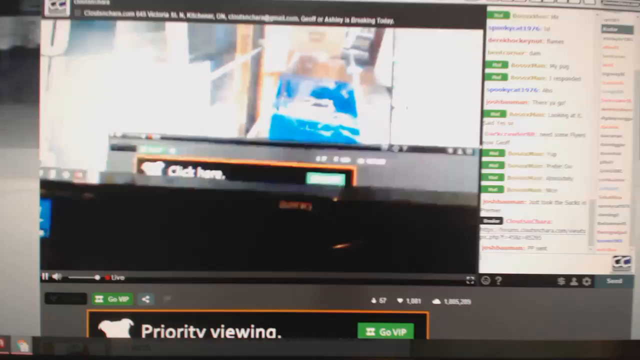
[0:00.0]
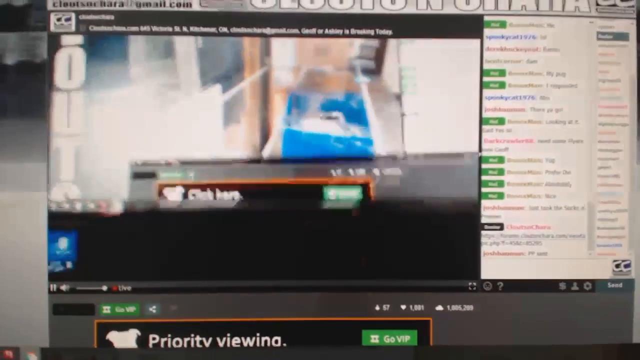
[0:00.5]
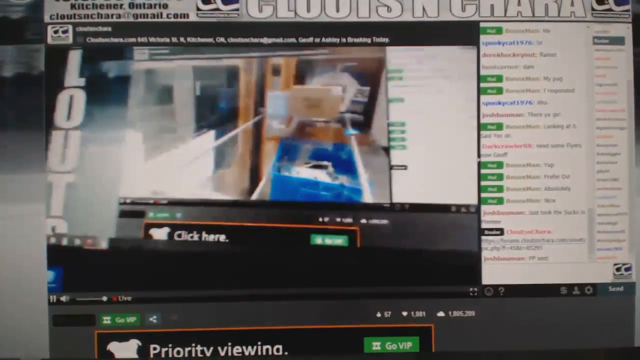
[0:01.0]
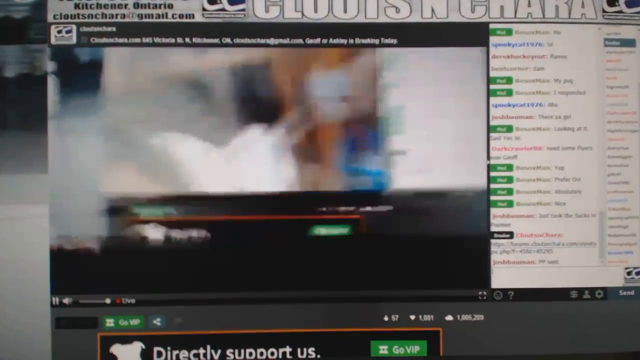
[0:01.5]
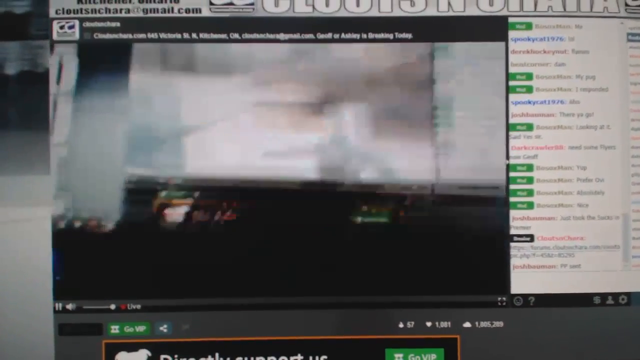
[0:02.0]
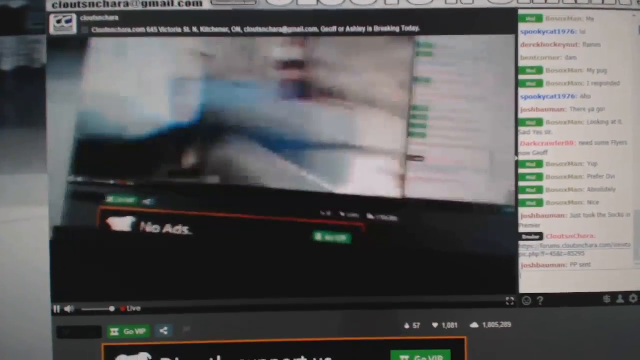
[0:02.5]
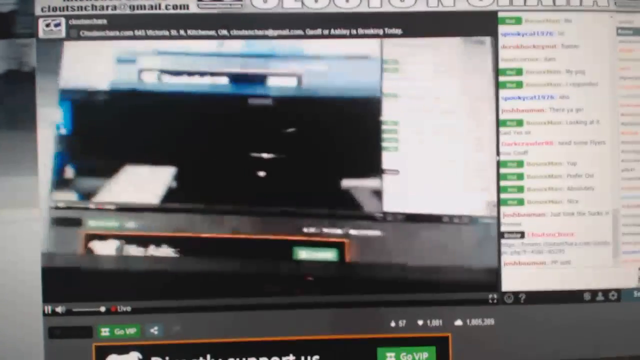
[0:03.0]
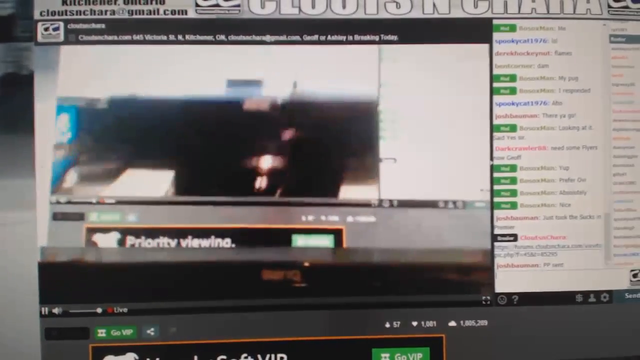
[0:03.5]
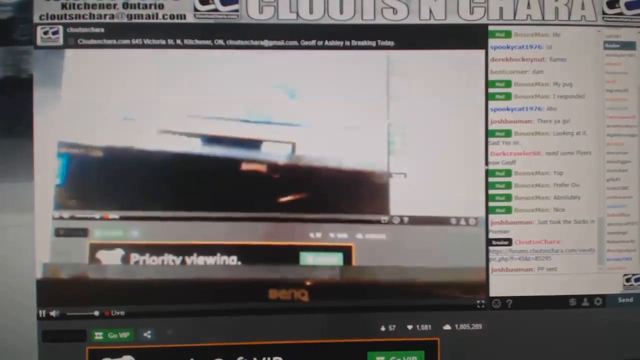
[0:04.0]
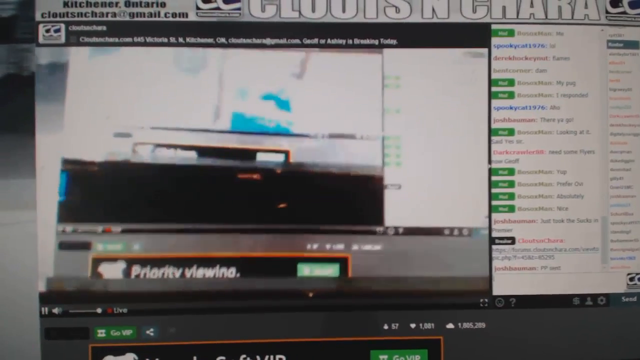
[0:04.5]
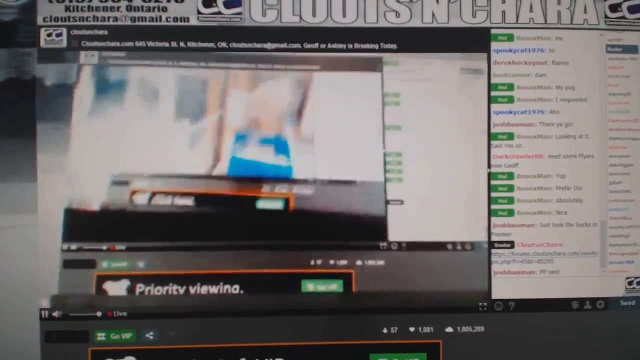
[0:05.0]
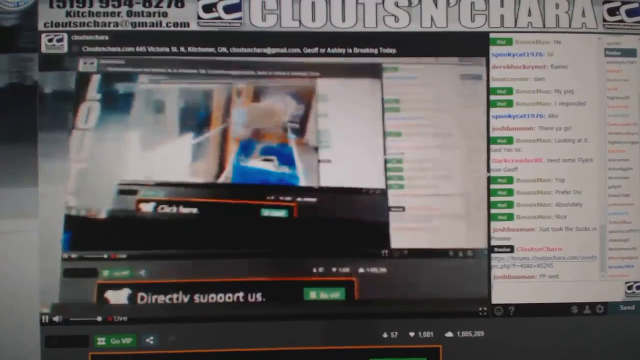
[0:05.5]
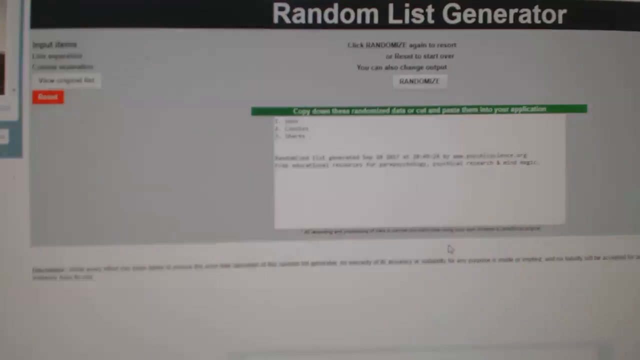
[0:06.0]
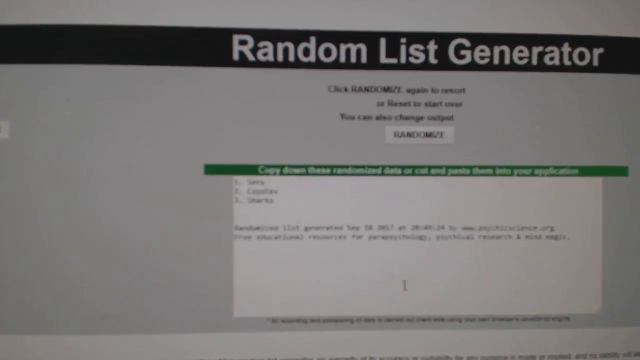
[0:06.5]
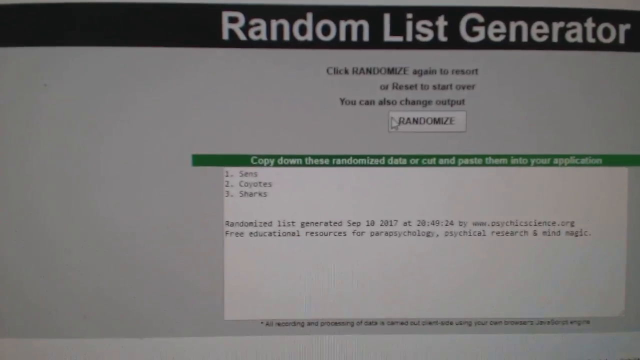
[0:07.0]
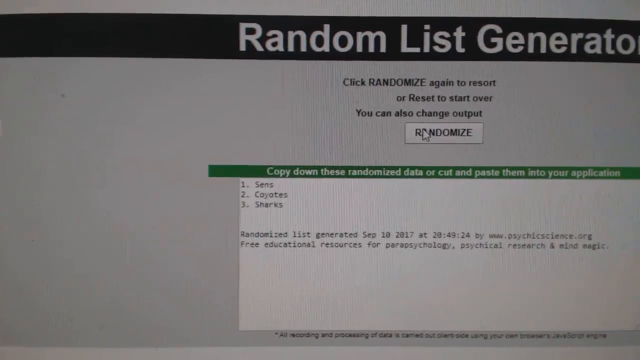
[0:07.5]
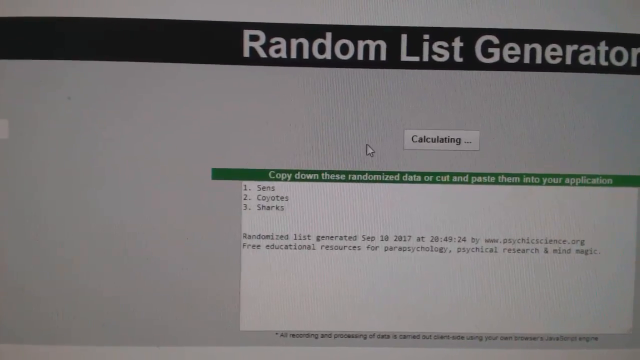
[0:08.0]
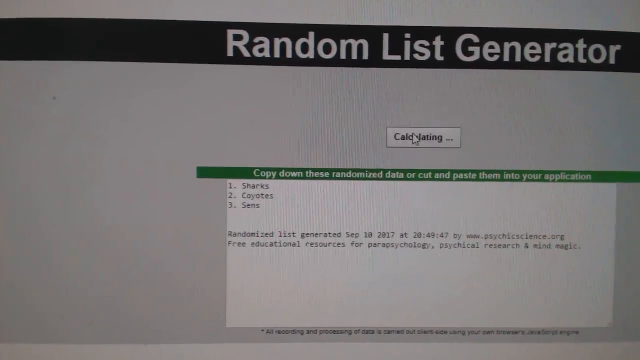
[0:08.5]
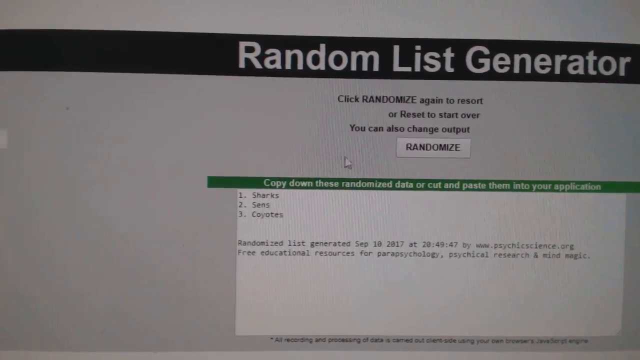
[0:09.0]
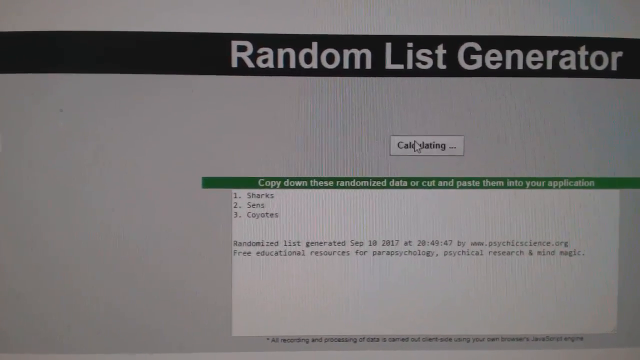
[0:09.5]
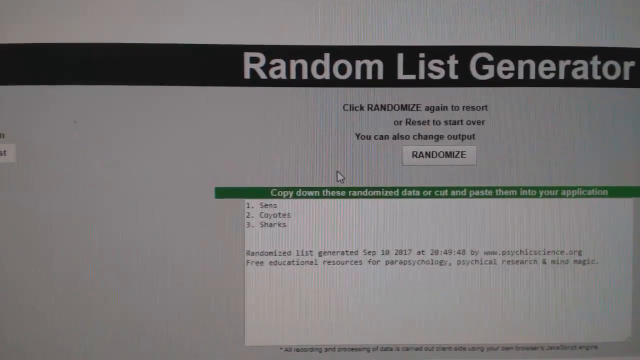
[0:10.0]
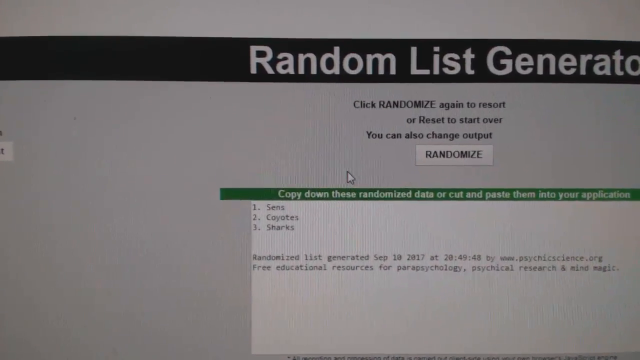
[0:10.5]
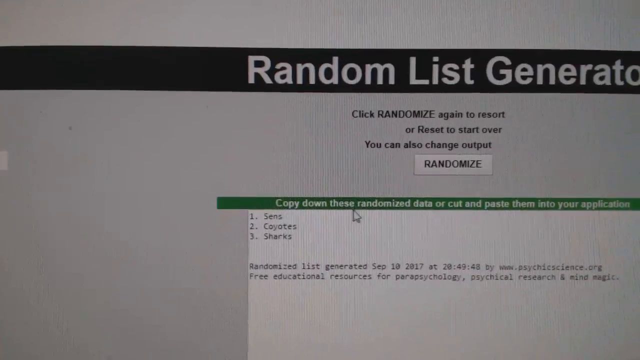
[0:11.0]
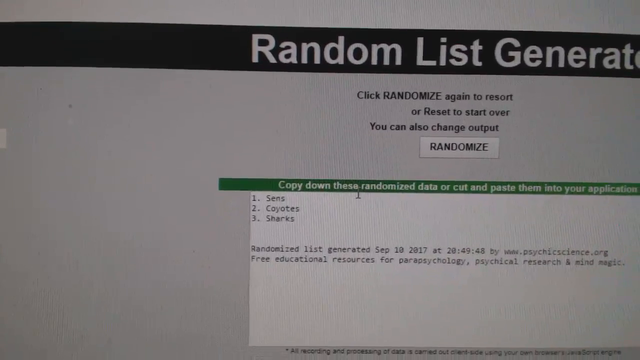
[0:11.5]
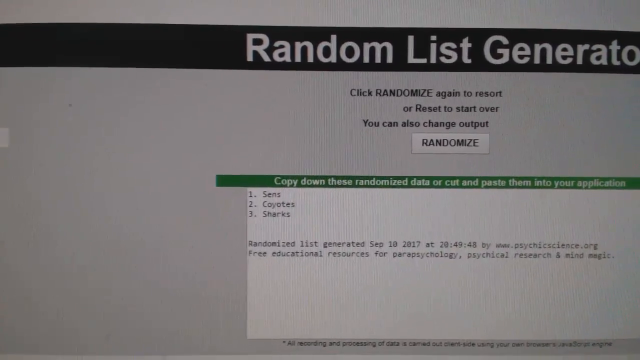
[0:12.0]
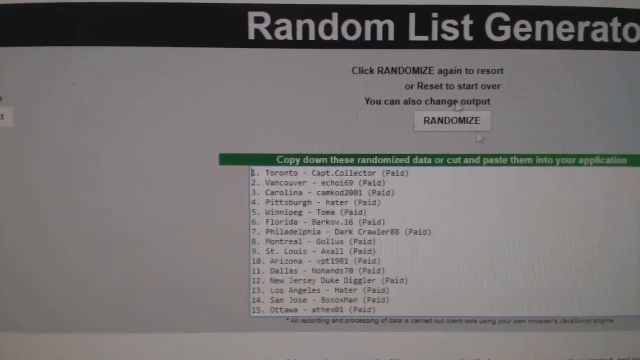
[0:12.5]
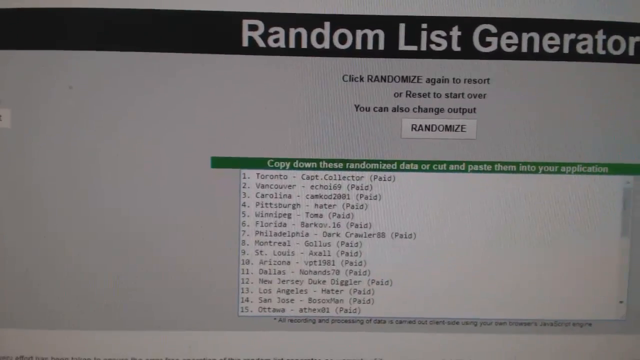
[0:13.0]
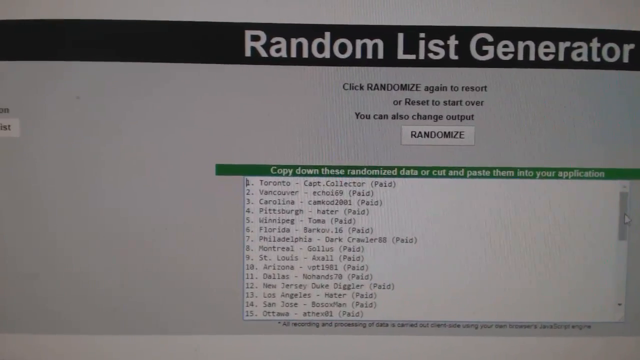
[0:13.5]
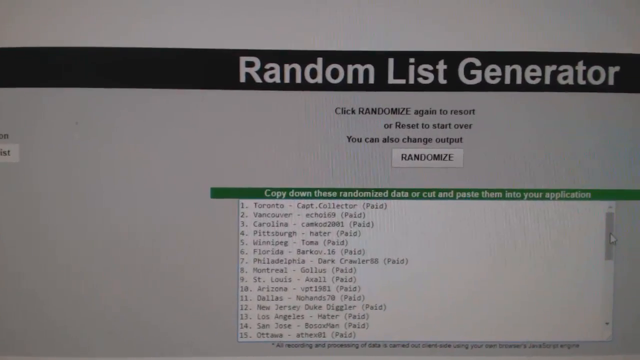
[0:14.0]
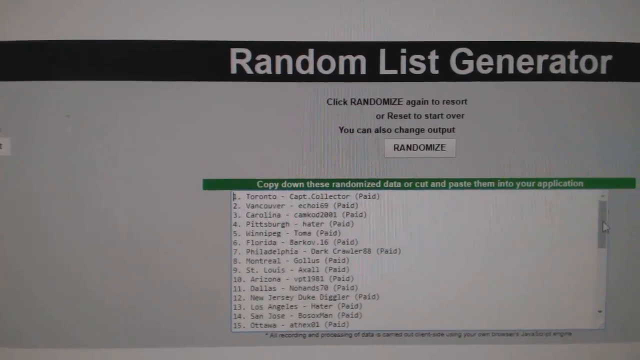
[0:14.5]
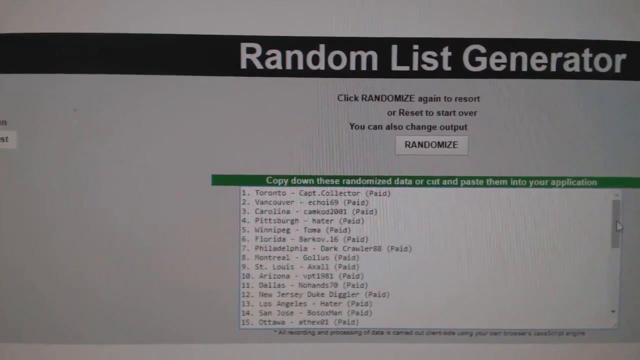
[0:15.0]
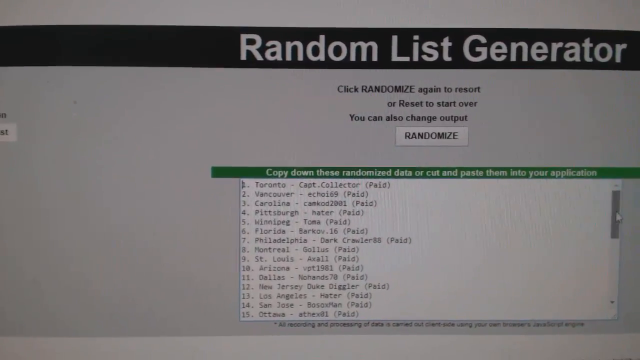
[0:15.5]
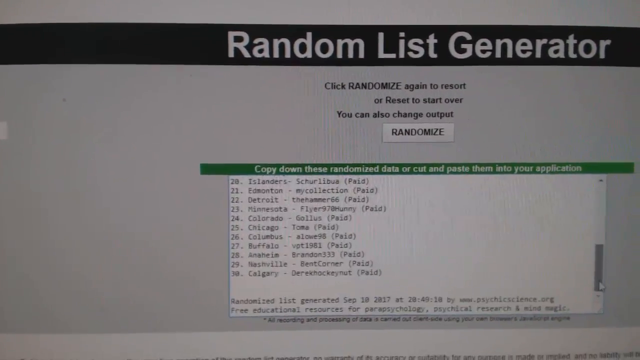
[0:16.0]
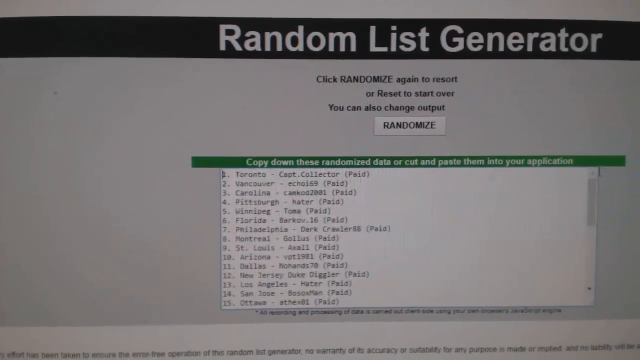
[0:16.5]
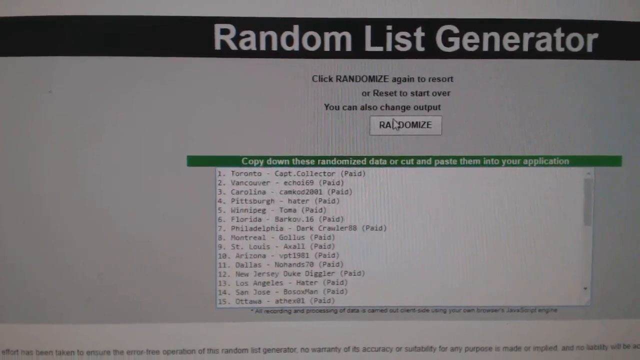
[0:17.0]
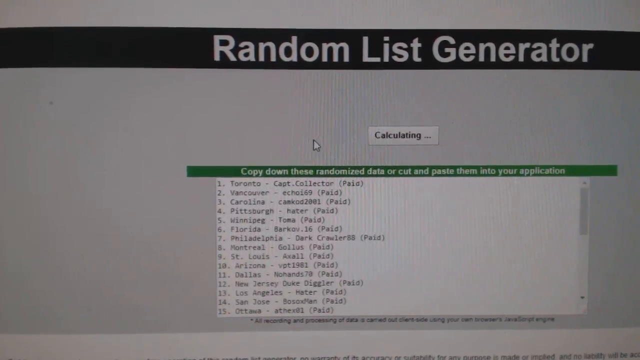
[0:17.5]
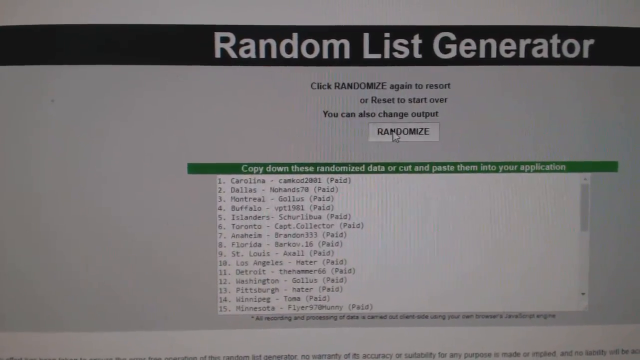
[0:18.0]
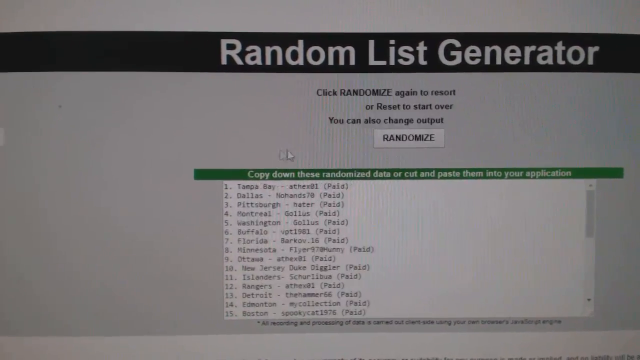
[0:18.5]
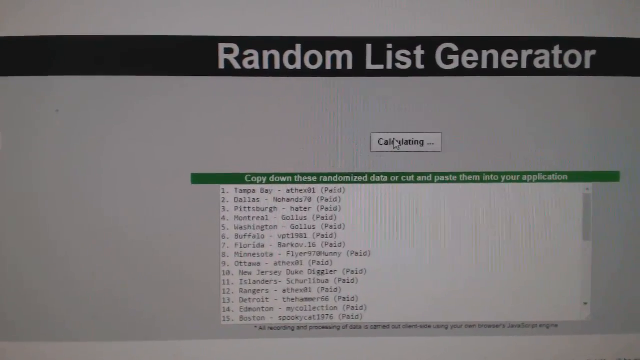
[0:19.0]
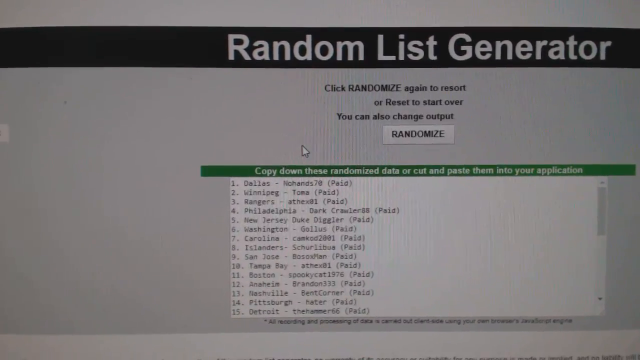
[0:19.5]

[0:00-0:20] What appears to be a camera recording a screen that is recording another screen opens the video, and the image sort of repeats from there. There seems to be a chat log on the right-hand side. For roughly the first seven seconds there is an advert that seems to be promoting no ads. The screen then changes to a website that says "random list generator". He presses a button, and then it says "calculate and randomise". A big list of data appears, randomized for him. Some of the lists include different city names and state names in the US and Canada, and one says "sharks and coyotes". The contents look very random, as the website name may suggest.